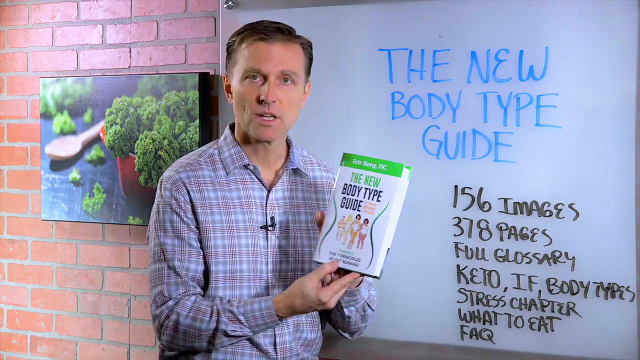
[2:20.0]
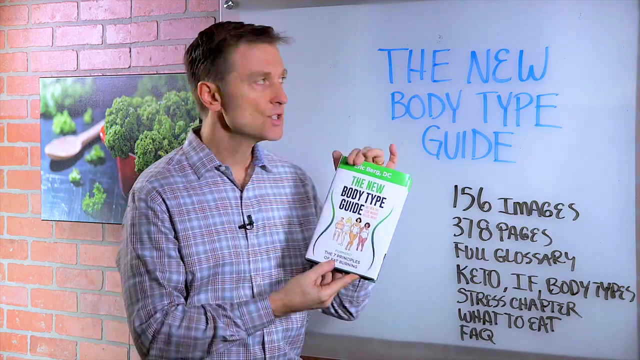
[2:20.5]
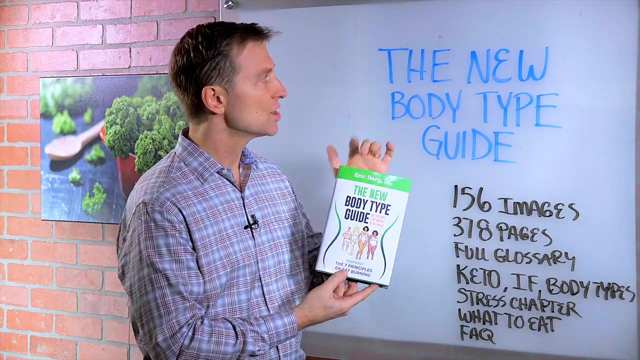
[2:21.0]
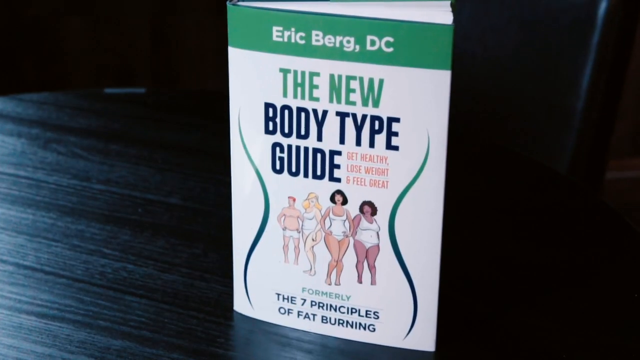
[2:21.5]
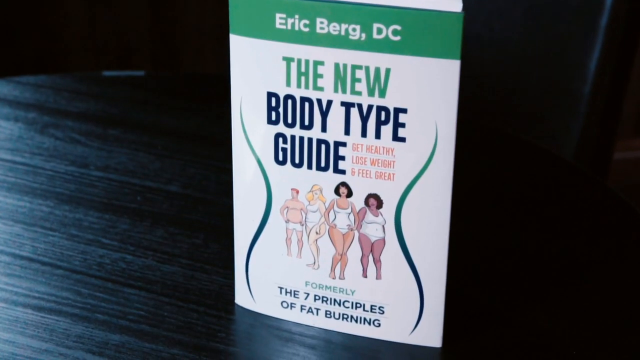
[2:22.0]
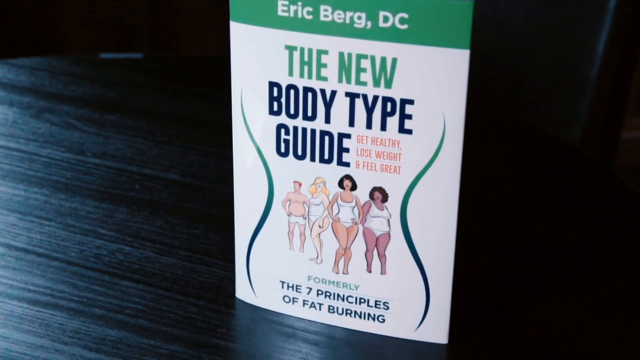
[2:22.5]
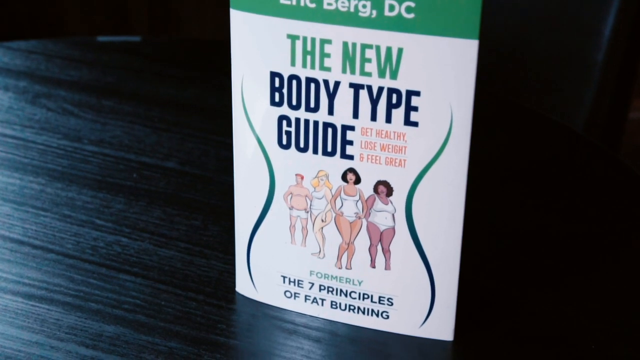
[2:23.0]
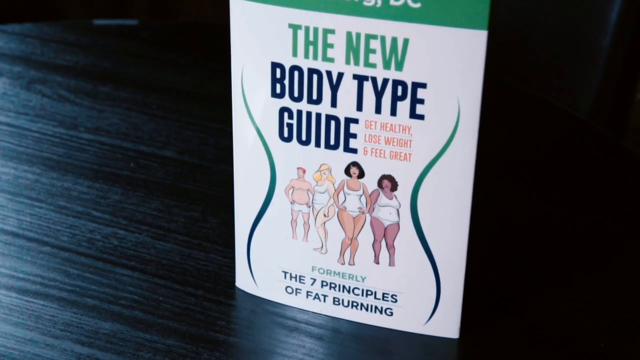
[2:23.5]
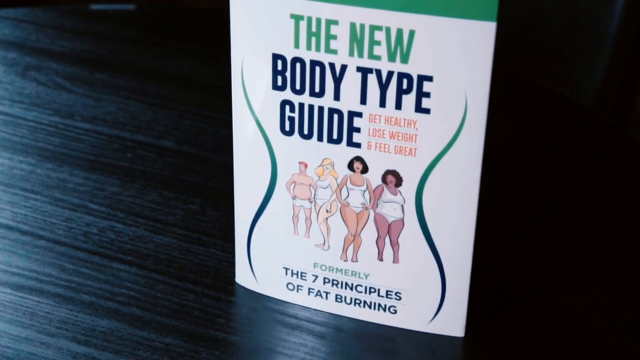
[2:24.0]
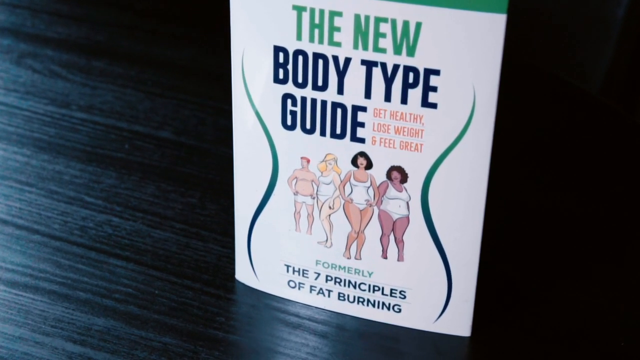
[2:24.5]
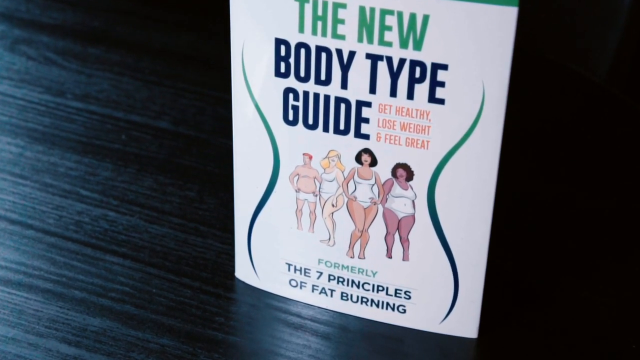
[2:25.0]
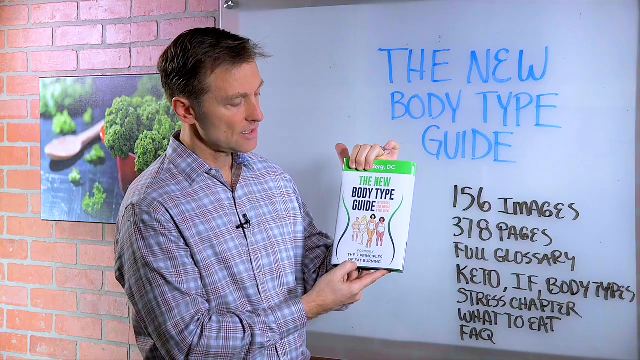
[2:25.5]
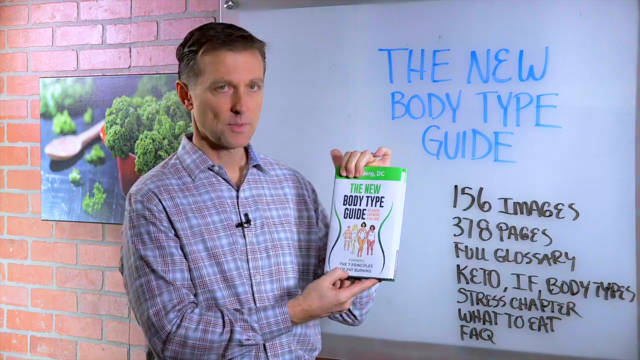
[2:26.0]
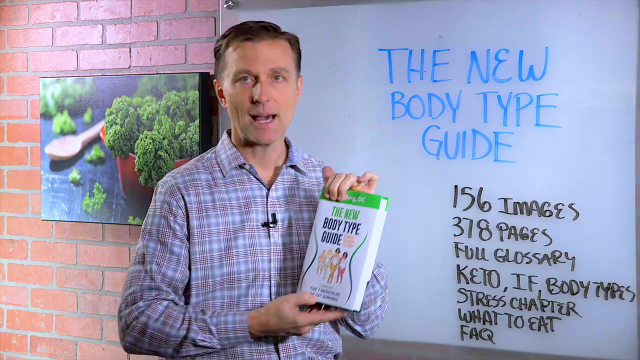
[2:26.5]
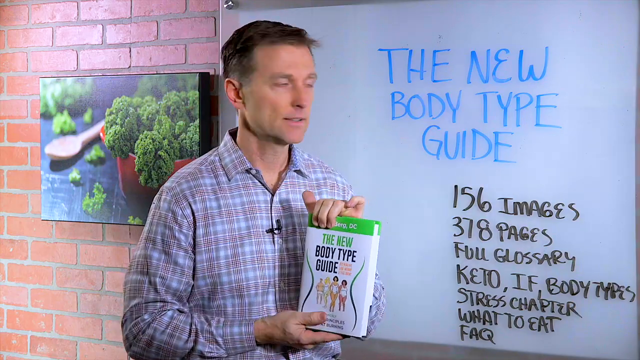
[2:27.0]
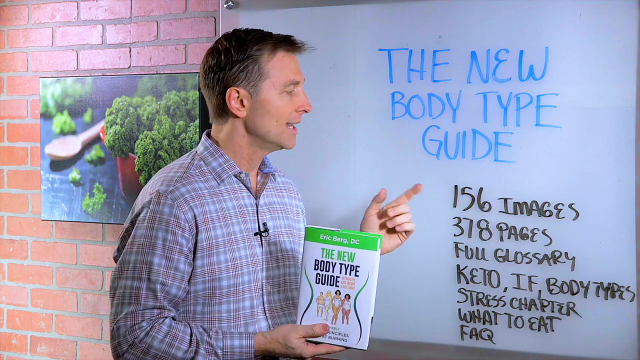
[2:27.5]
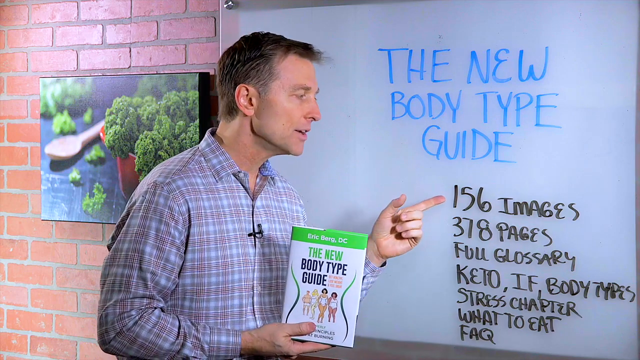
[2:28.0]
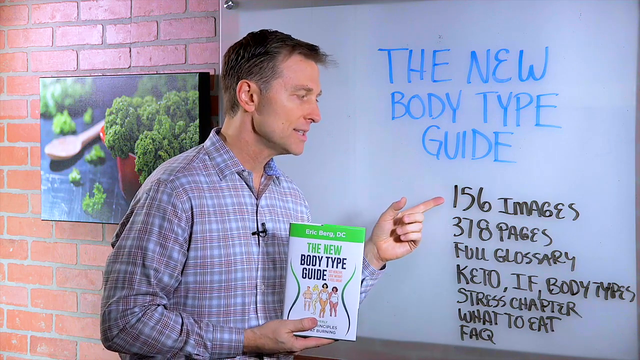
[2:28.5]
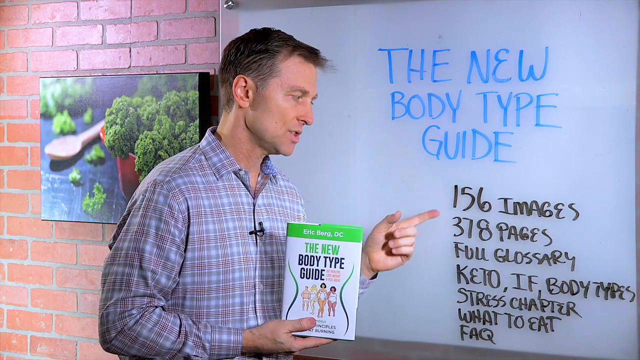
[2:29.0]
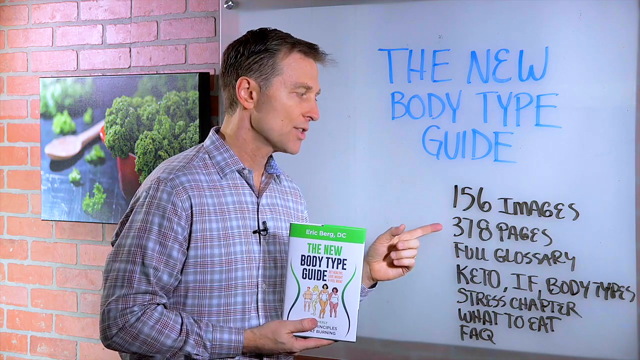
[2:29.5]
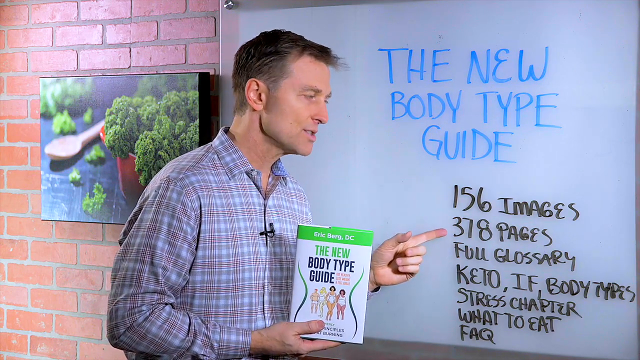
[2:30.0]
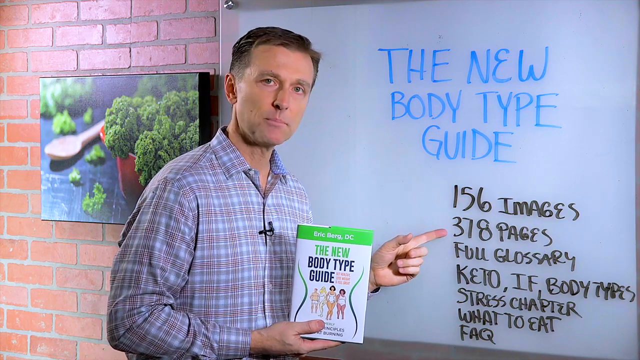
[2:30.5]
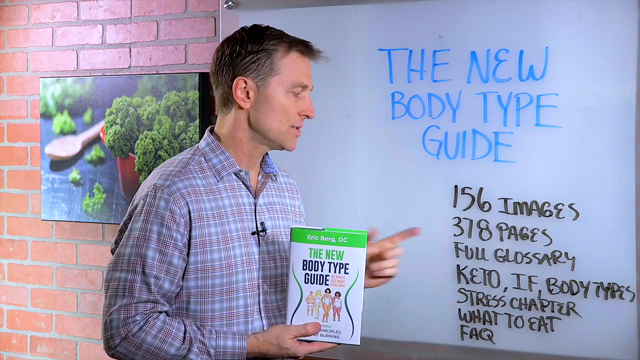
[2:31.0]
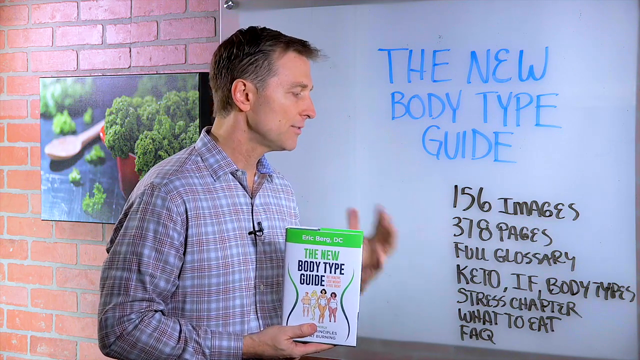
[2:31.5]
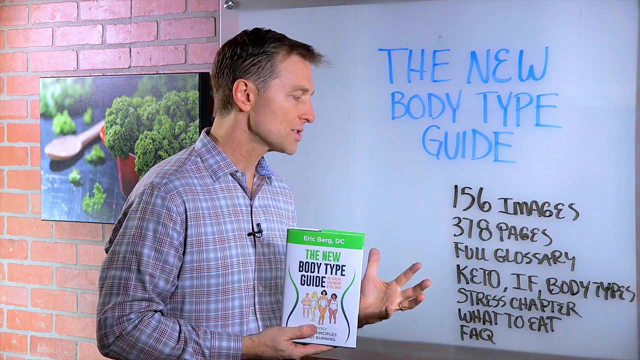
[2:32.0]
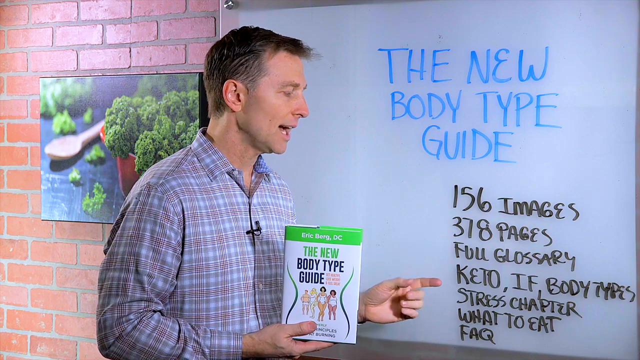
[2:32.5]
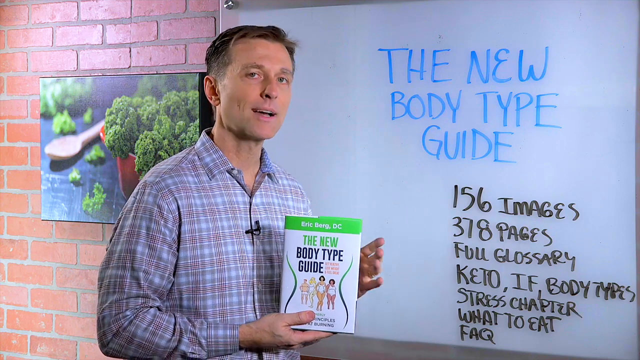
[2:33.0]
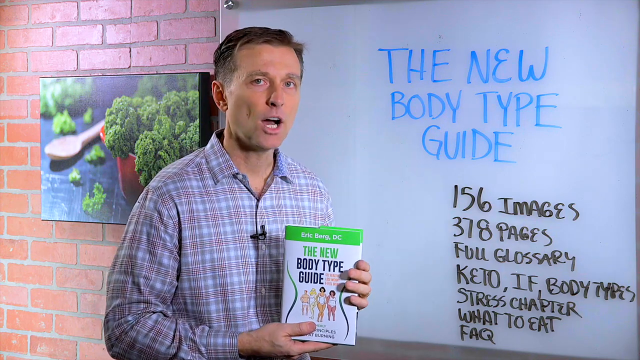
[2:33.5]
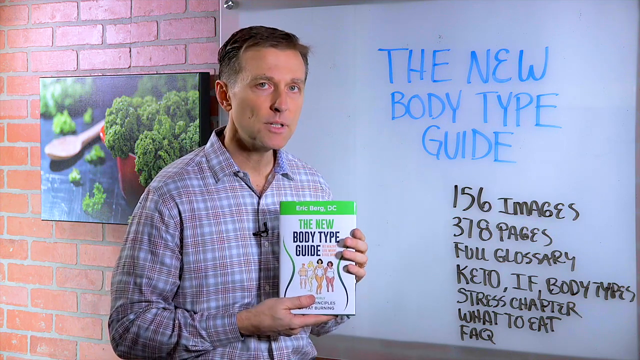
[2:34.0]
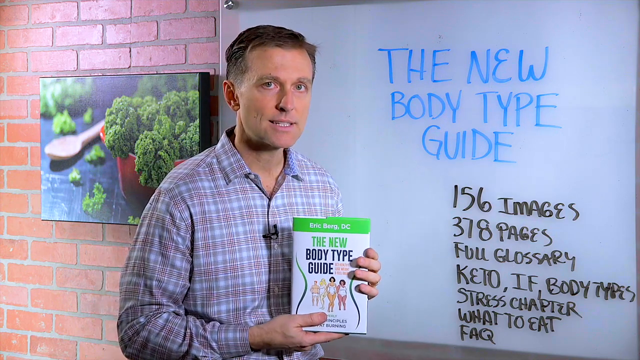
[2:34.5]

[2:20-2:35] The man holds the book "The New Body Type Guide." It has a white cover with a green strip and black writing, including "formerly the seven principles of fat burning," "156 images," "378 pages," "a full glossary," "keto," "stress," "Eric Berg, DC" and "get healthy, lose weight, and feel great." The cover shows four characters of different body types. The book is also shown sitting on a black table, partly open and standing up. The camera cuts back to the man.